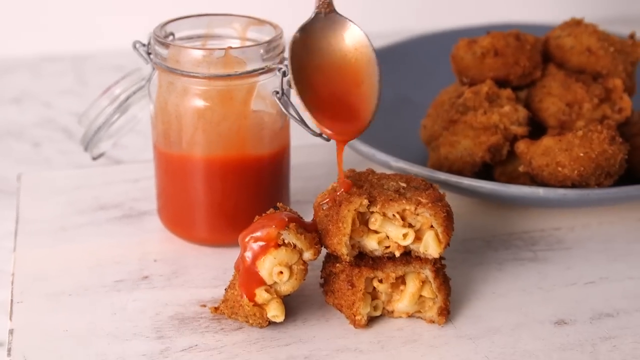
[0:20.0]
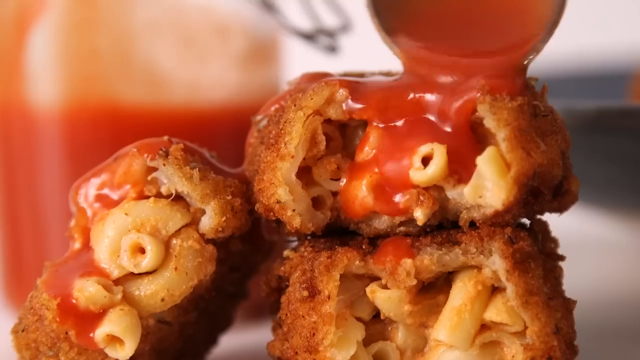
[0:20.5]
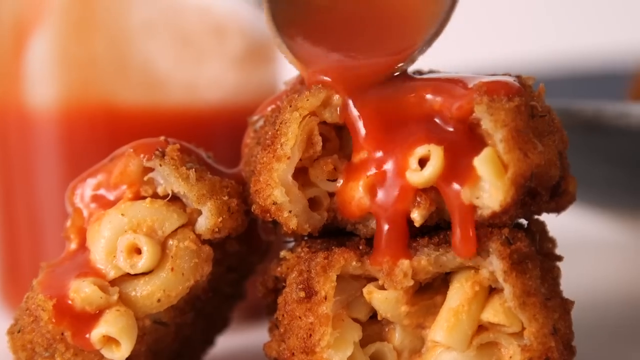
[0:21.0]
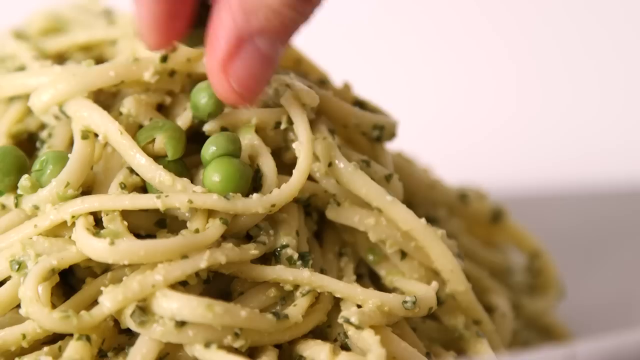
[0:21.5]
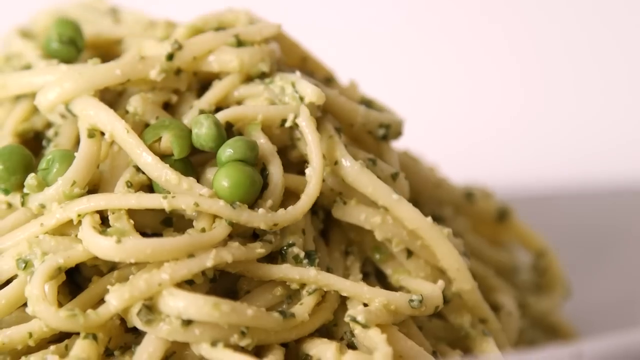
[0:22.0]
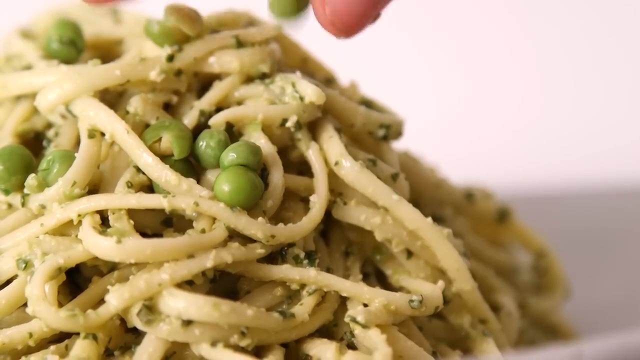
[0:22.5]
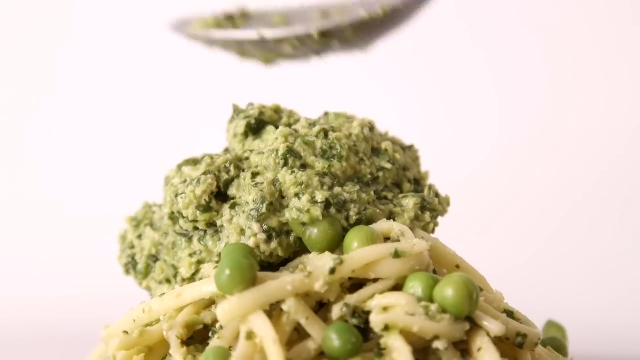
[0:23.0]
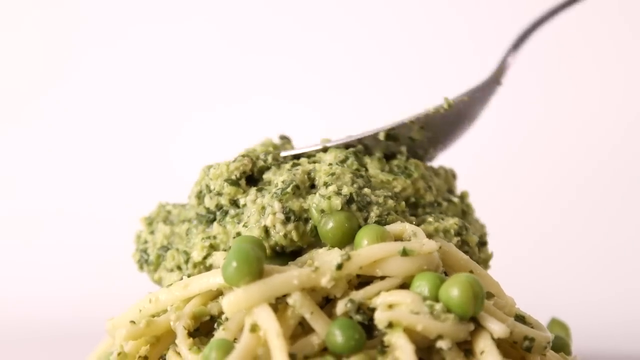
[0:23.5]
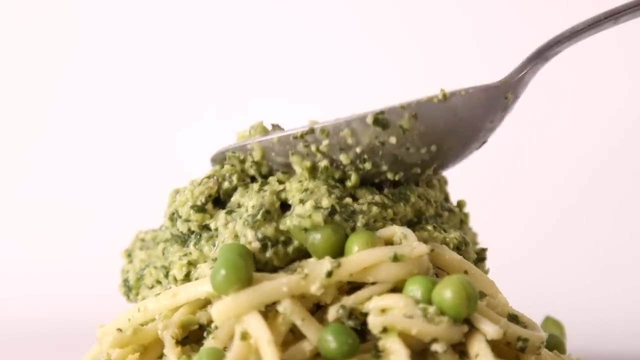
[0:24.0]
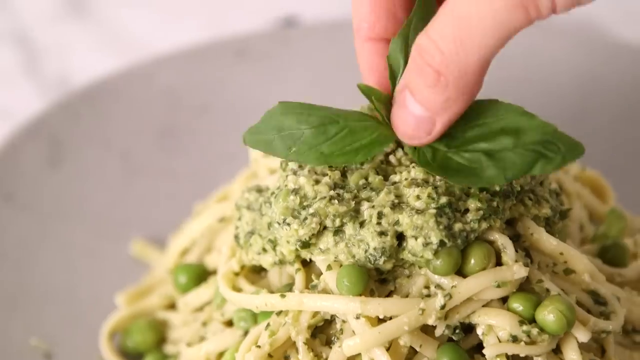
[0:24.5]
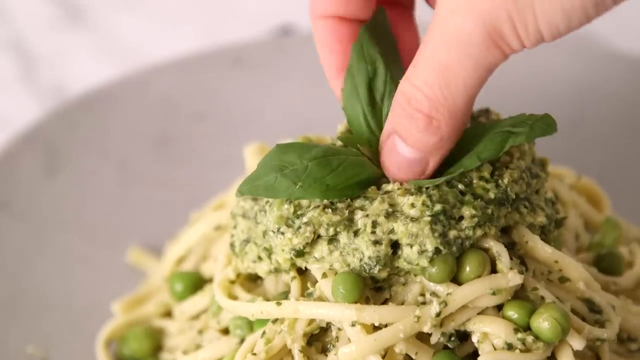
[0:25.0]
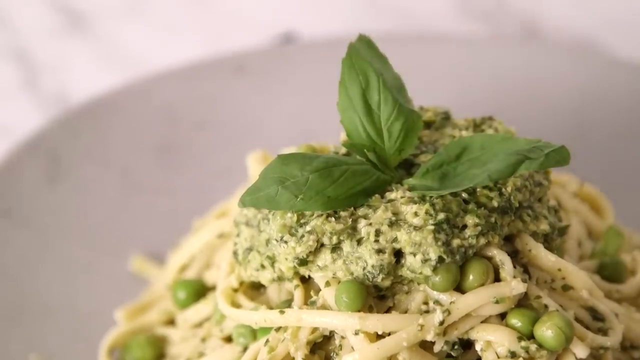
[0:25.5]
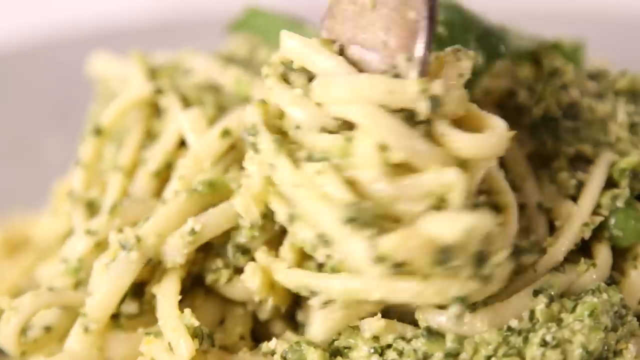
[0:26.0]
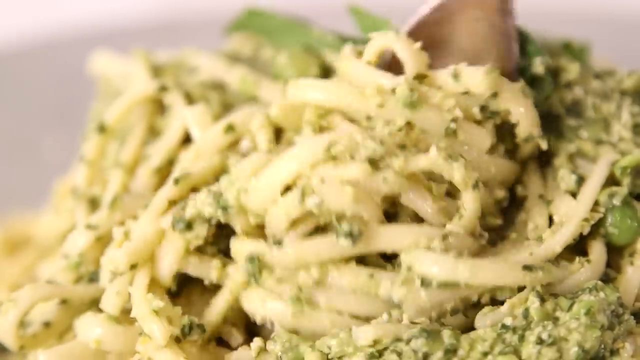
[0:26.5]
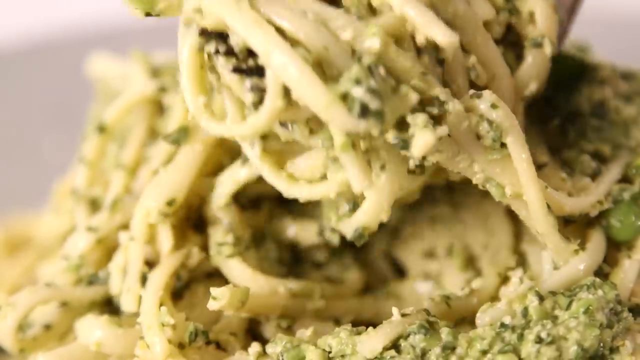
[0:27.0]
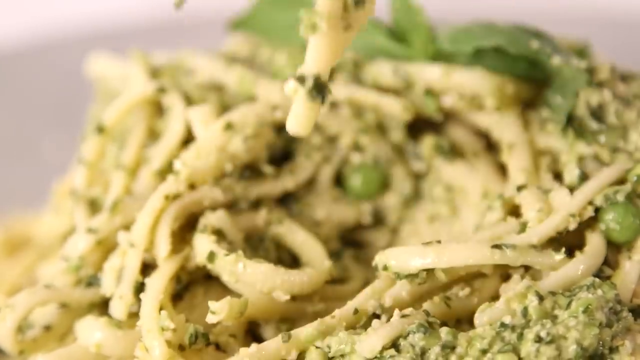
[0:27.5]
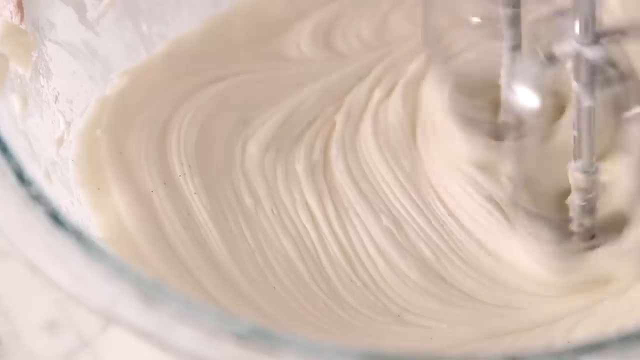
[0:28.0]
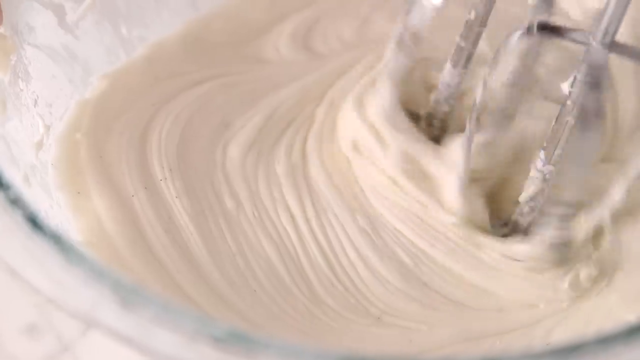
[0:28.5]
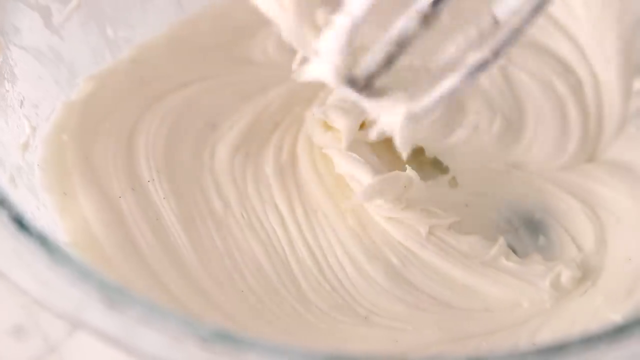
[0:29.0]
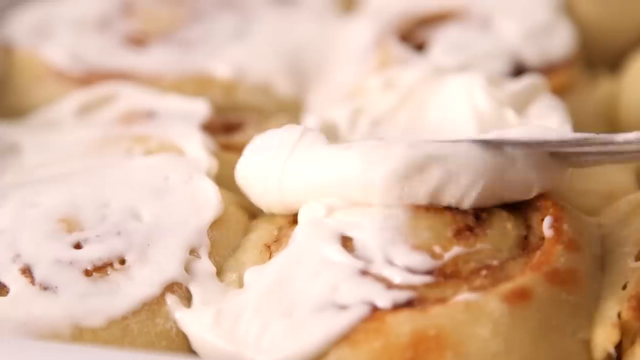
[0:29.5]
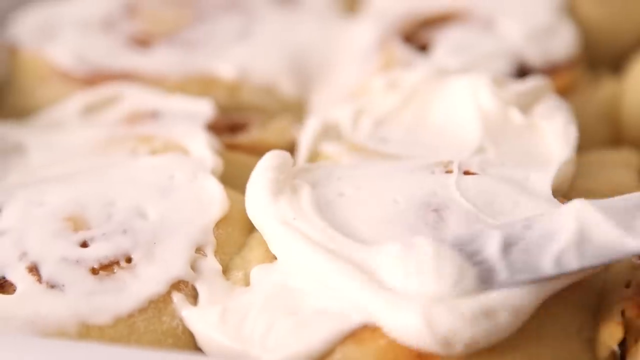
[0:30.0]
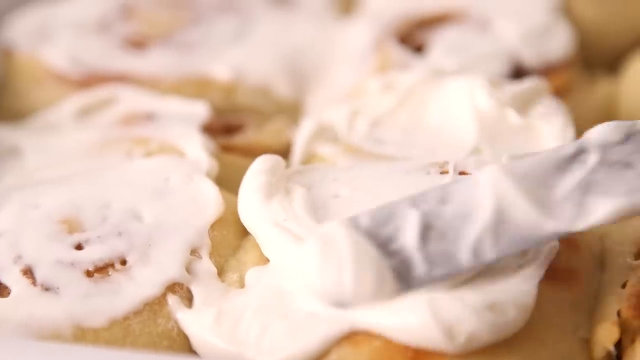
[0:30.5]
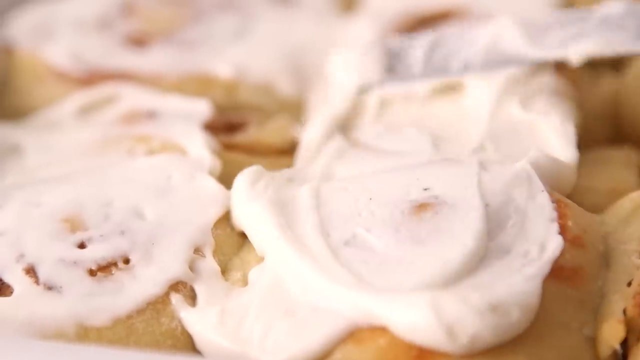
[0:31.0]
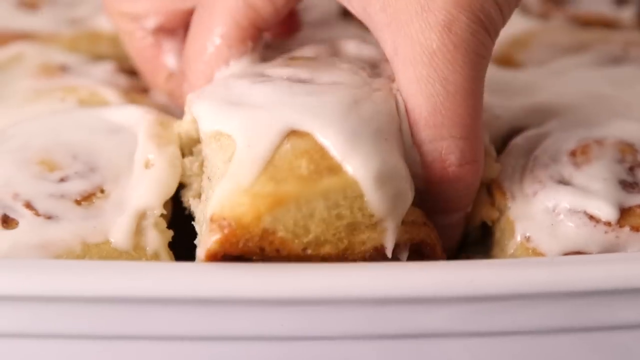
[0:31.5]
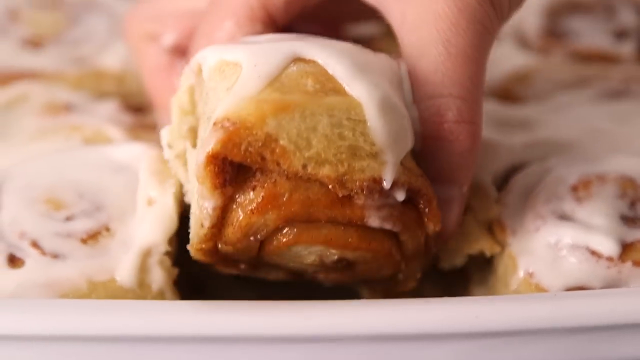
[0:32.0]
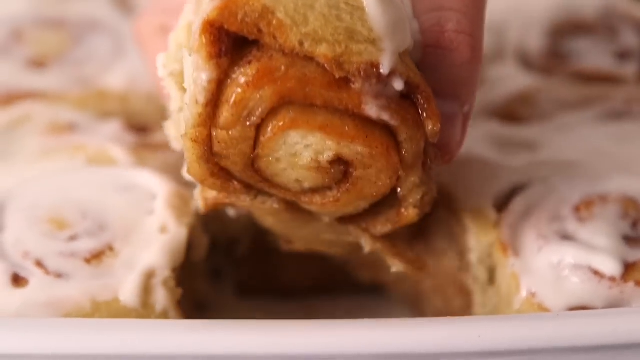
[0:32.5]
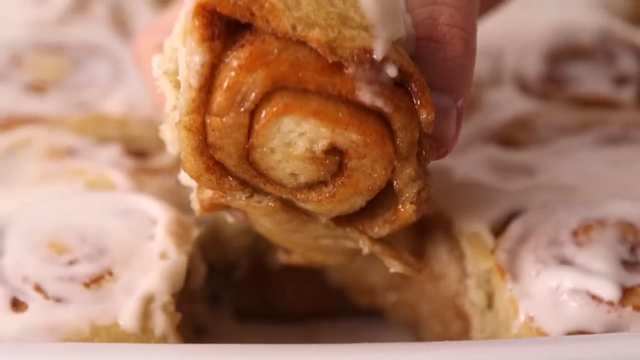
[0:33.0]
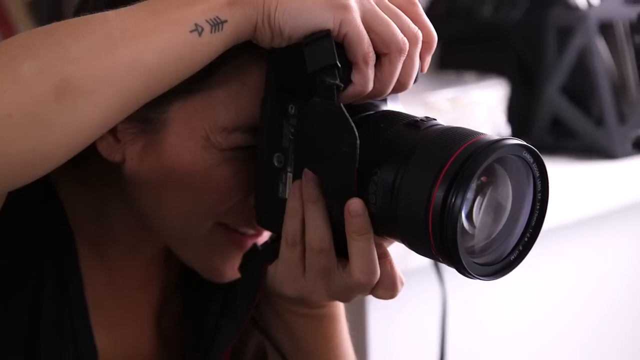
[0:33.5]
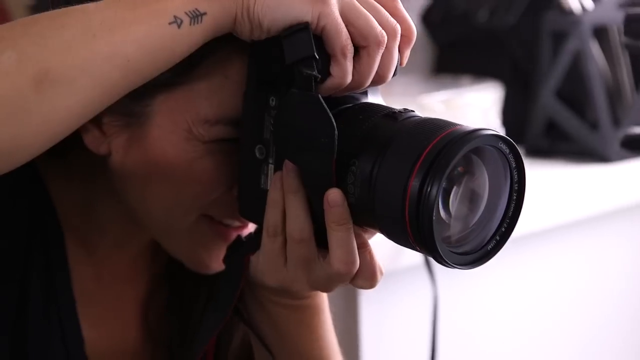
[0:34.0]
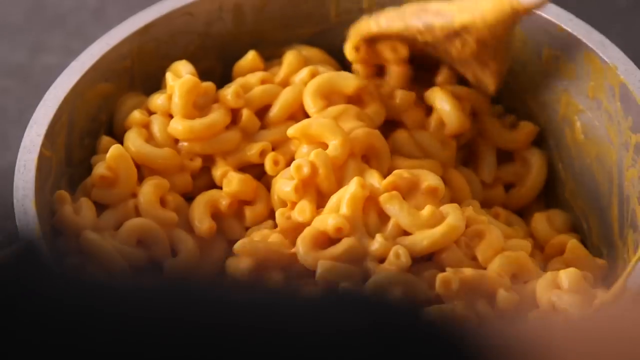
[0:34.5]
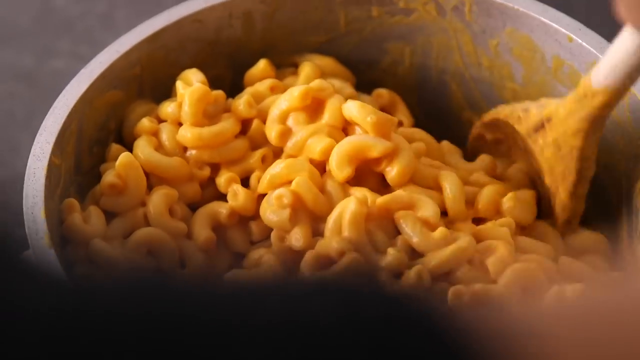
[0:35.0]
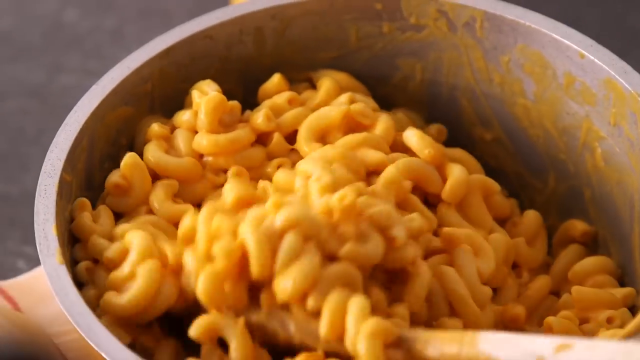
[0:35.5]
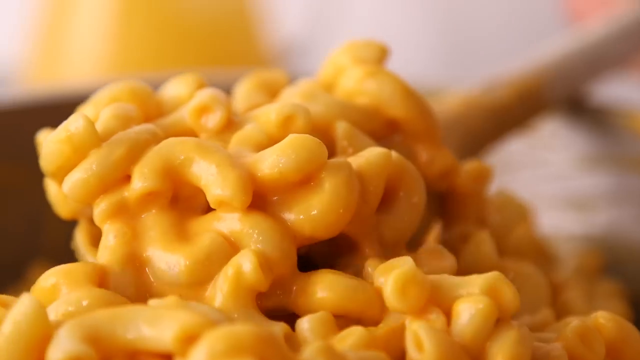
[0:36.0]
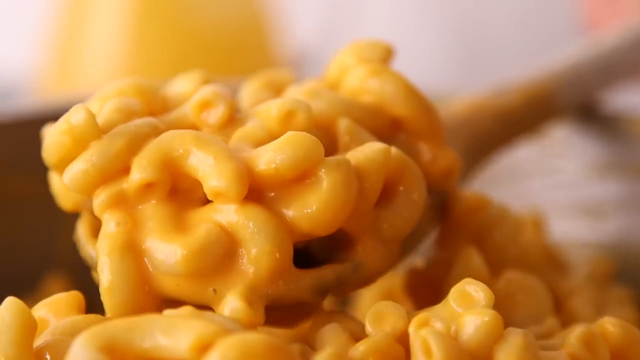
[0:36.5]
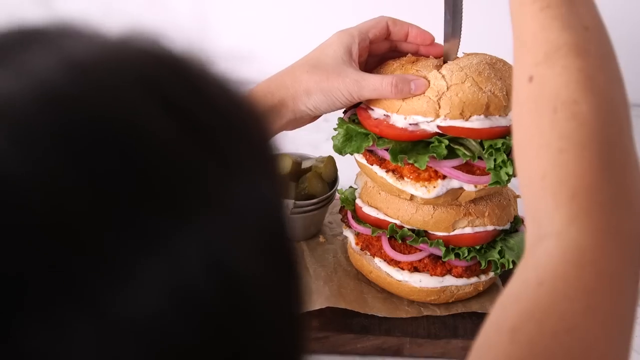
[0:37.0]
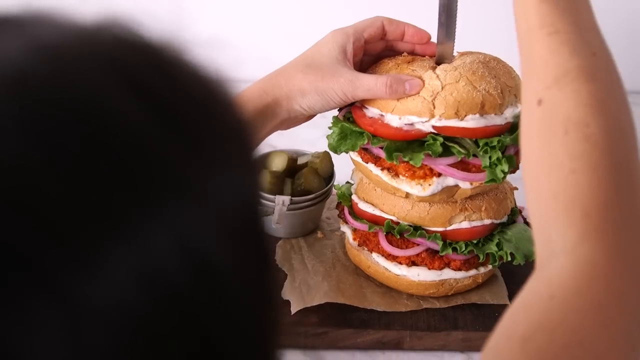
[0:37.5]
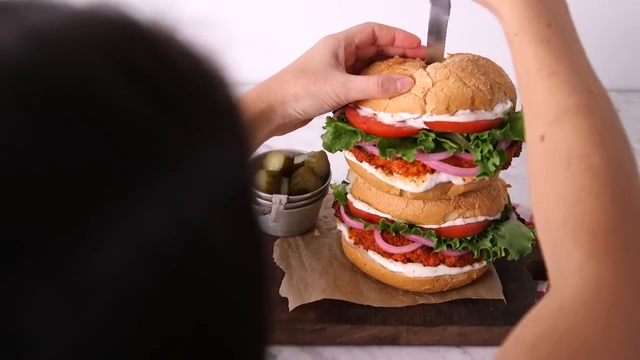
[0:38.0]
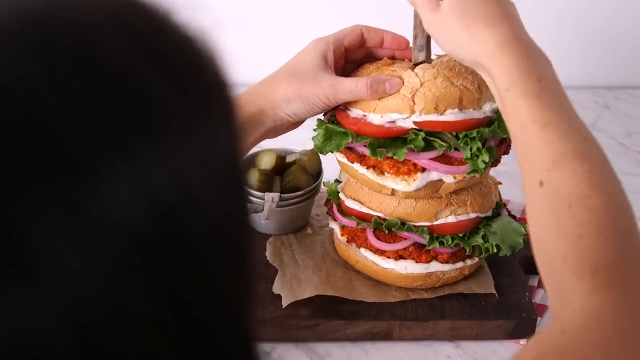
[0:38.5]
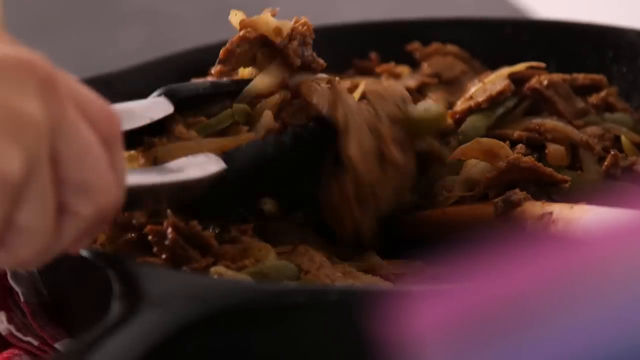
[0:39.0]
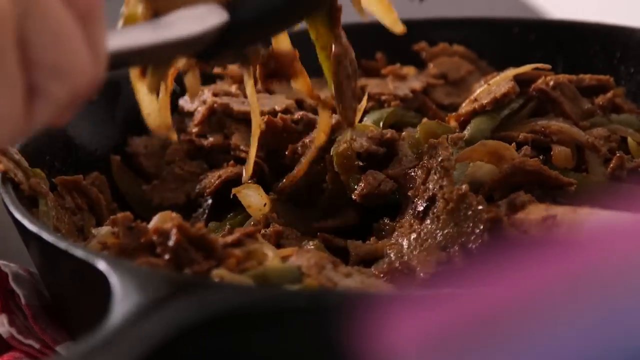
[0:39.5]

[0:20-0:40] The same woman bites the same food and licks her finger, and the sloppy-looking sandwich appears. The cookbook is Vegan Comfort Classics. The very colorful pastries and the fried macaroni and cheese bites drizzled with red sauce are shown, along with what looks like peas with pasta and some type of green, maybe chopped-up broccoli, as some broccoli is visible. She has also made cinnamon rolls with a creamy white frosting; they look very buttery on the bottom, and the icing is on the bottom of them. She stirs a big pot of macaroni and cheese, and there is a huge, very sloppy sandwich. She tops the pasta with basil, and the video goes straight to her cinnamon rolls. Some type of stir fry is briefly shown, looking like beef, maybe pork. The same shots of the same foods keep repeating.